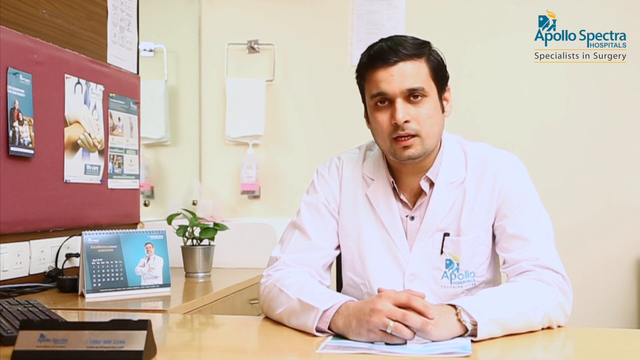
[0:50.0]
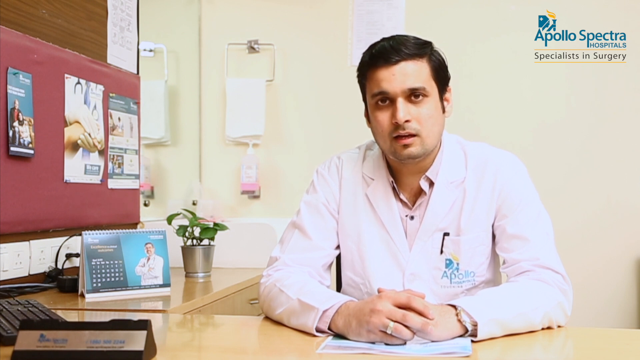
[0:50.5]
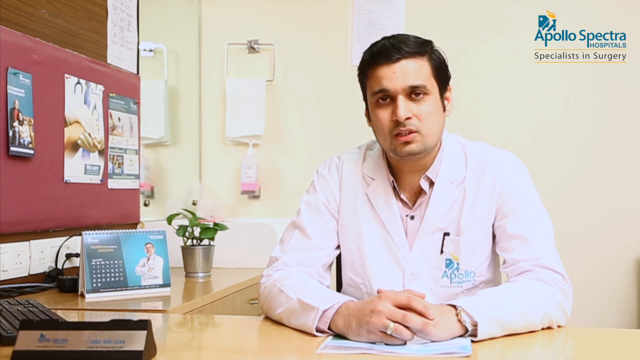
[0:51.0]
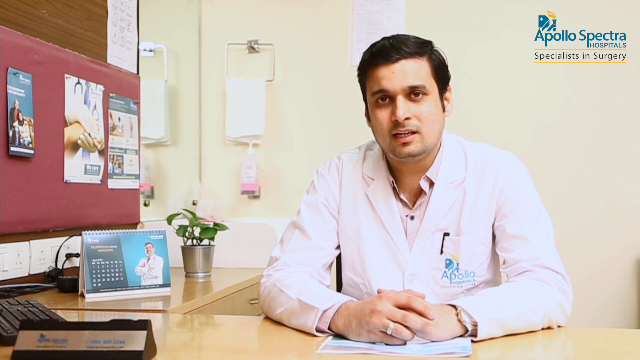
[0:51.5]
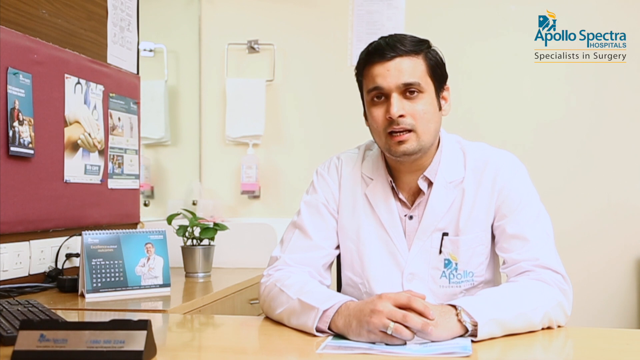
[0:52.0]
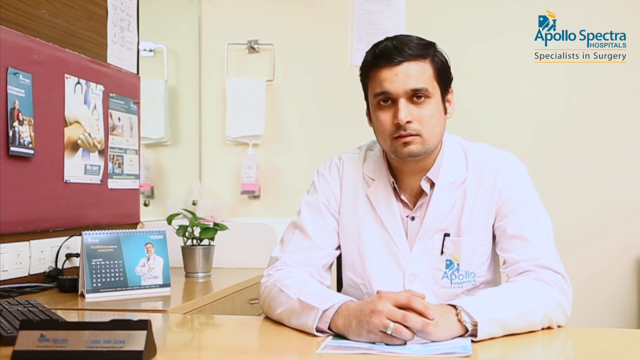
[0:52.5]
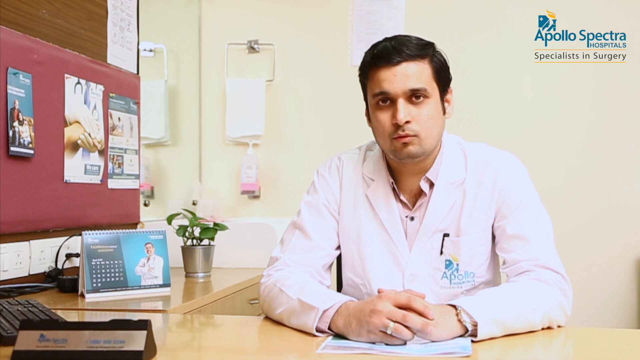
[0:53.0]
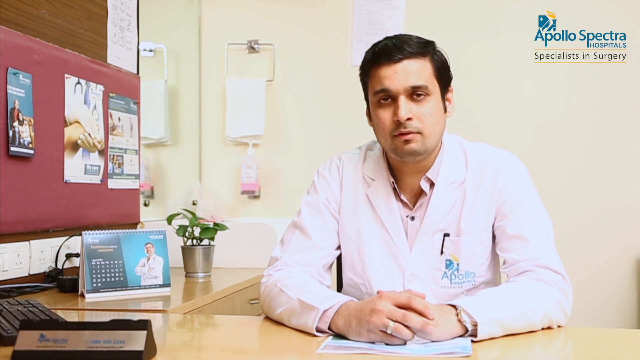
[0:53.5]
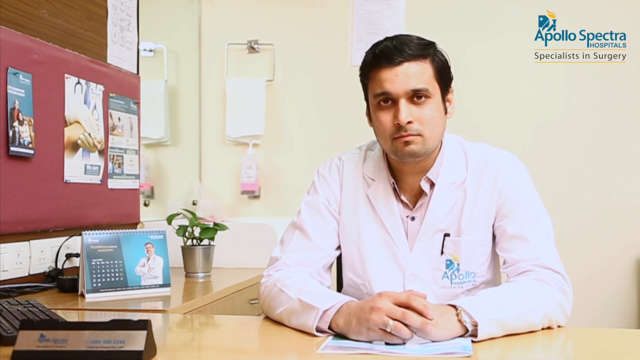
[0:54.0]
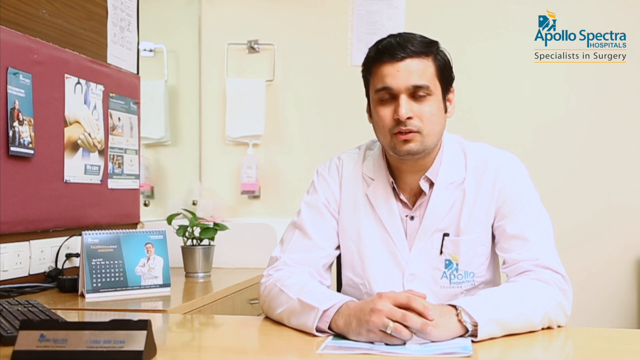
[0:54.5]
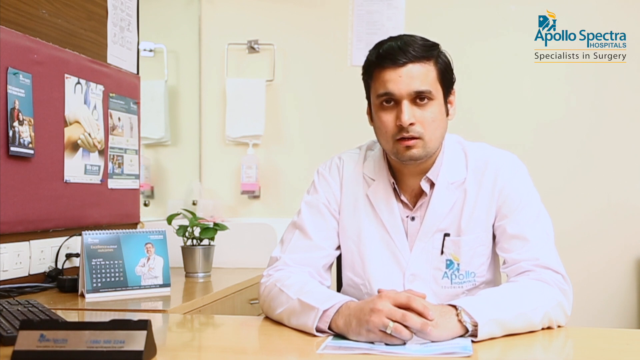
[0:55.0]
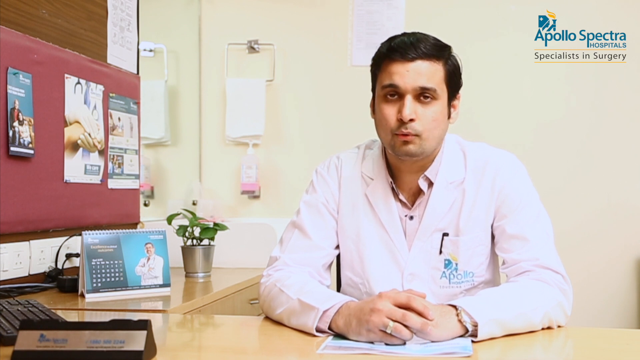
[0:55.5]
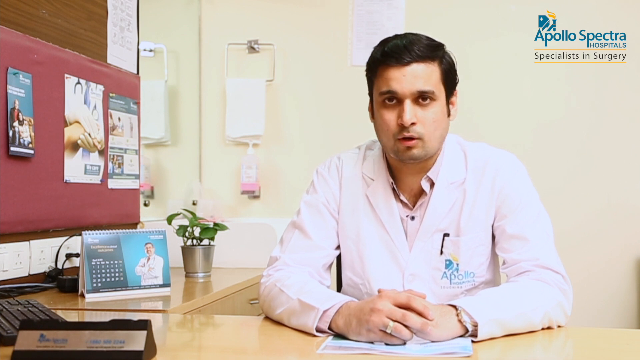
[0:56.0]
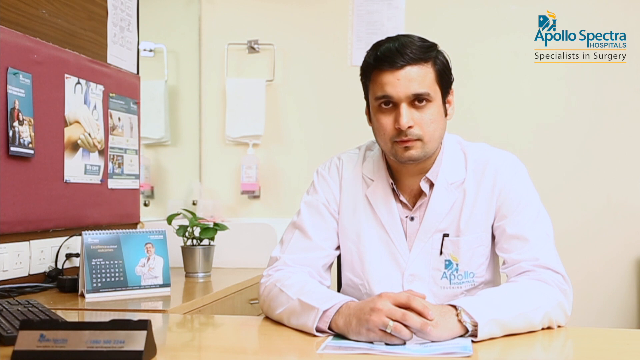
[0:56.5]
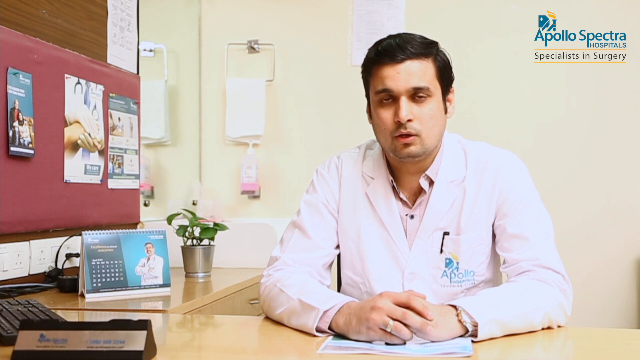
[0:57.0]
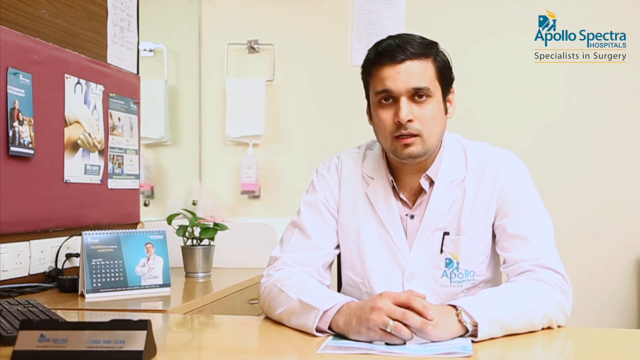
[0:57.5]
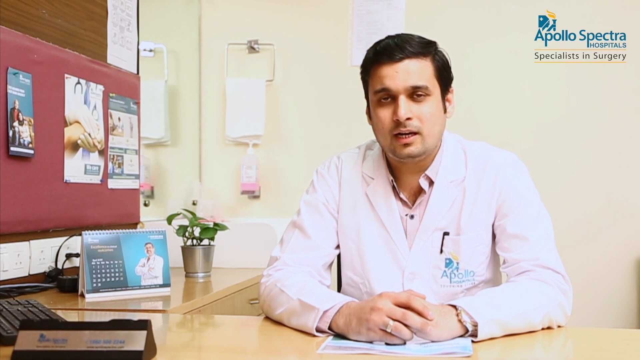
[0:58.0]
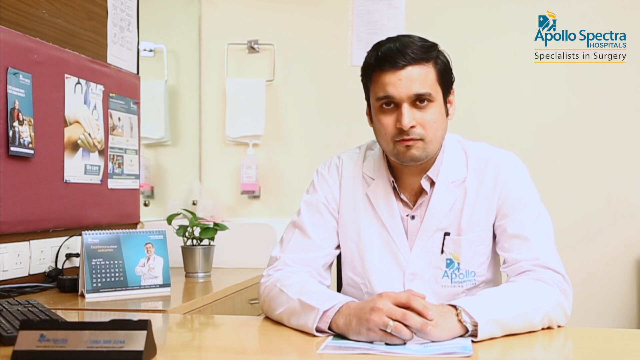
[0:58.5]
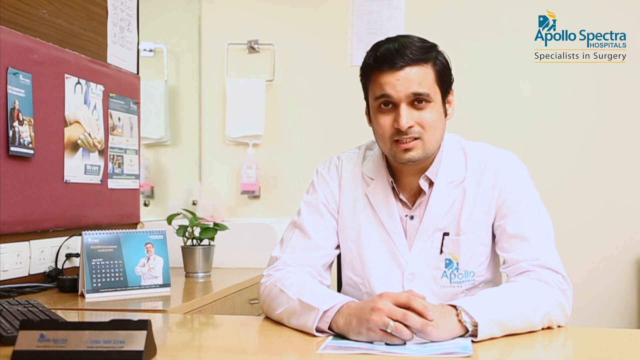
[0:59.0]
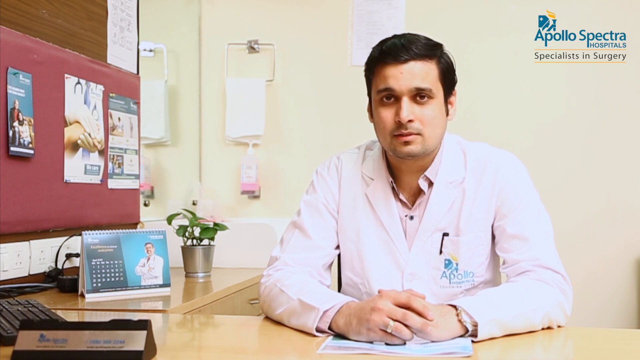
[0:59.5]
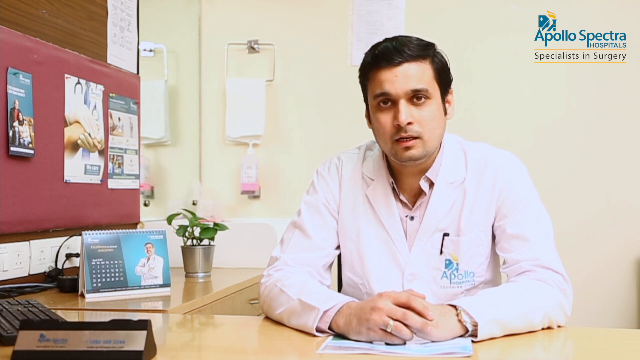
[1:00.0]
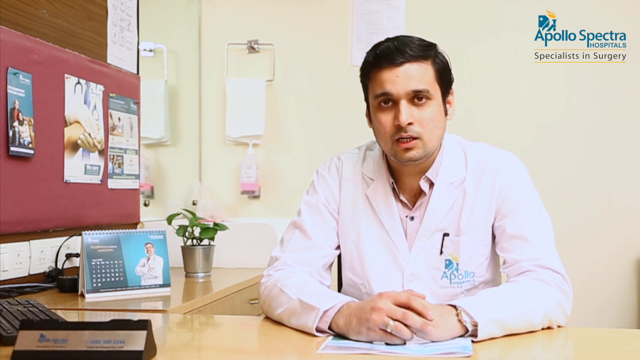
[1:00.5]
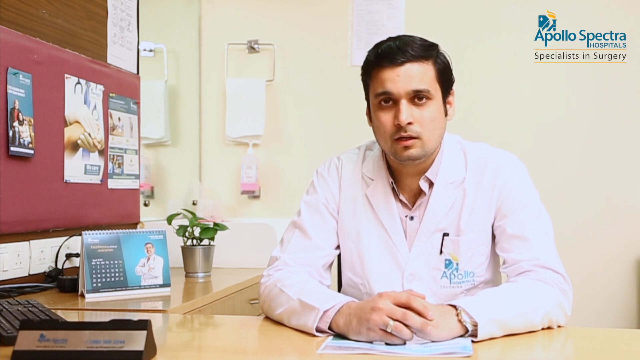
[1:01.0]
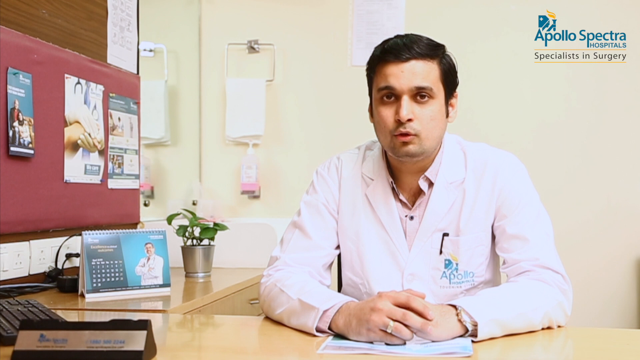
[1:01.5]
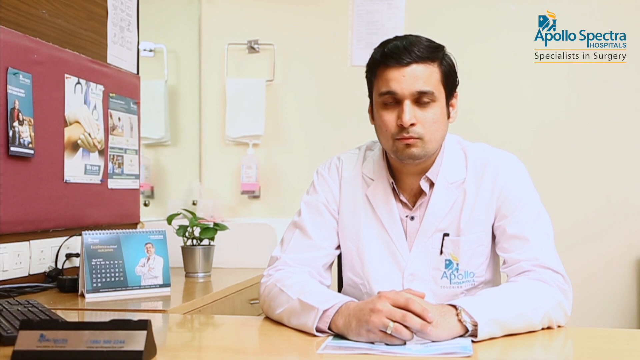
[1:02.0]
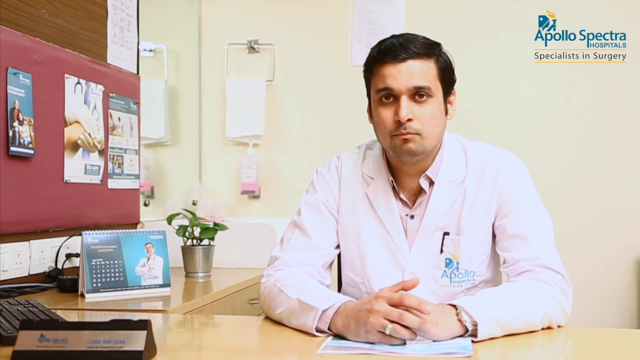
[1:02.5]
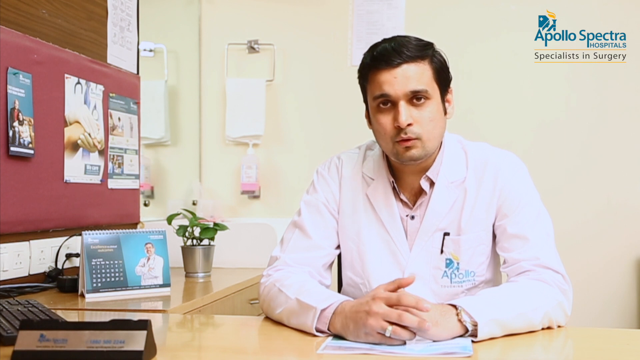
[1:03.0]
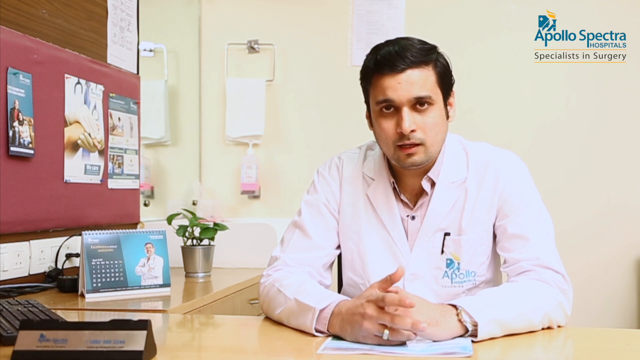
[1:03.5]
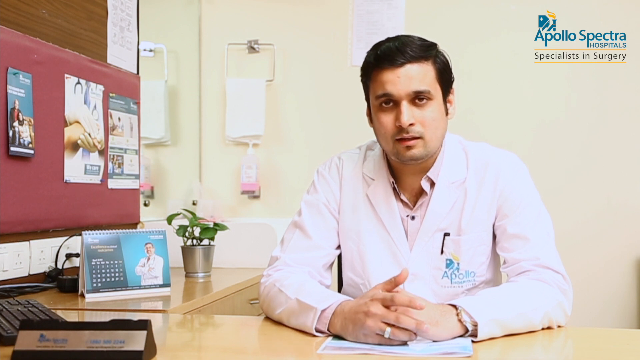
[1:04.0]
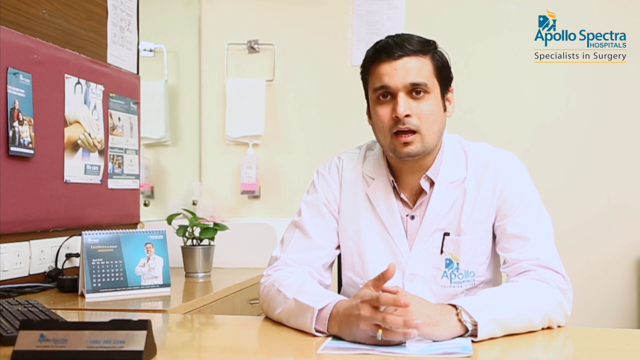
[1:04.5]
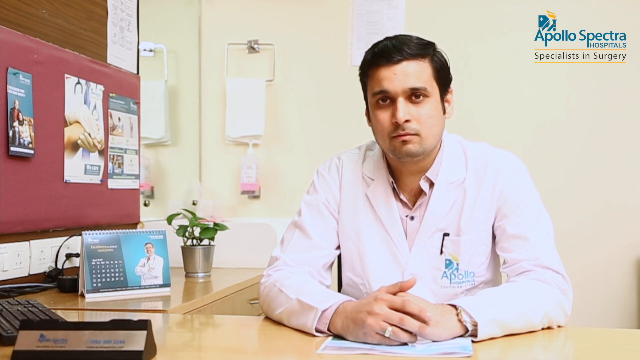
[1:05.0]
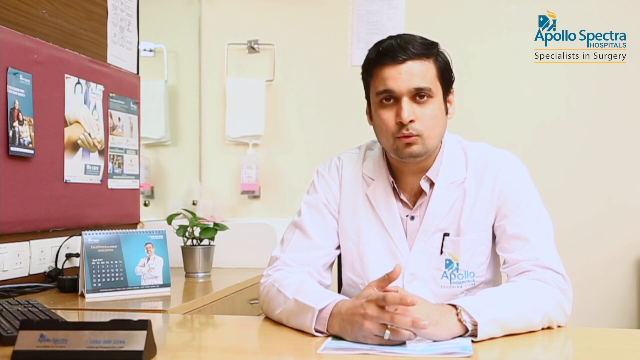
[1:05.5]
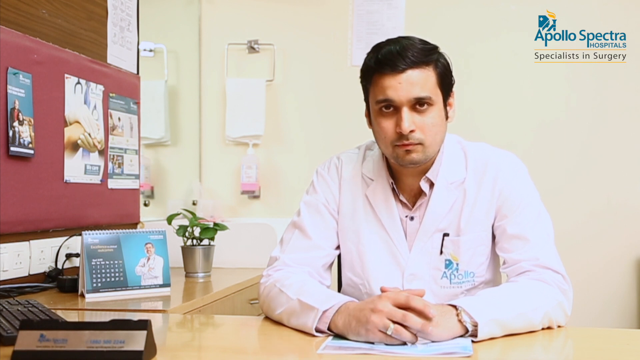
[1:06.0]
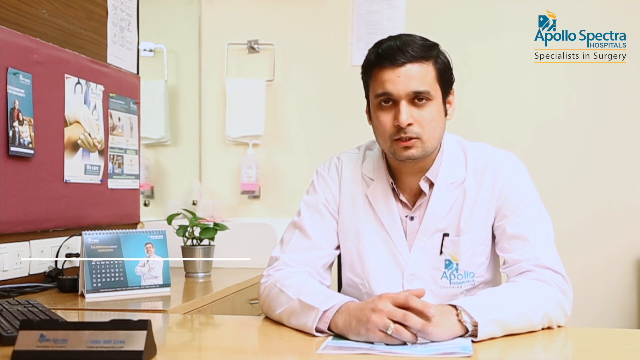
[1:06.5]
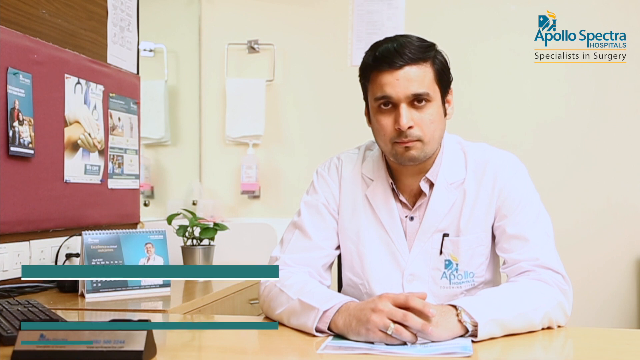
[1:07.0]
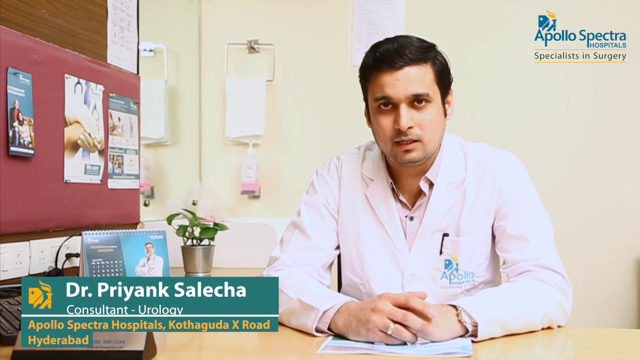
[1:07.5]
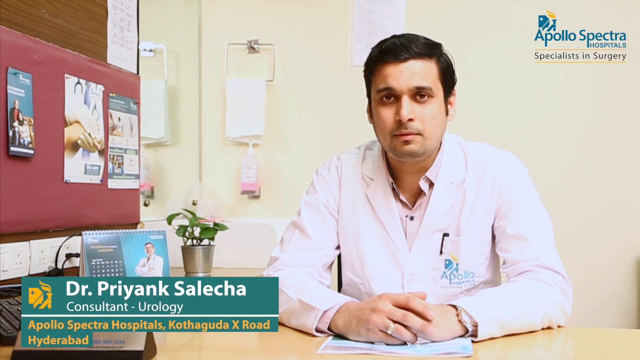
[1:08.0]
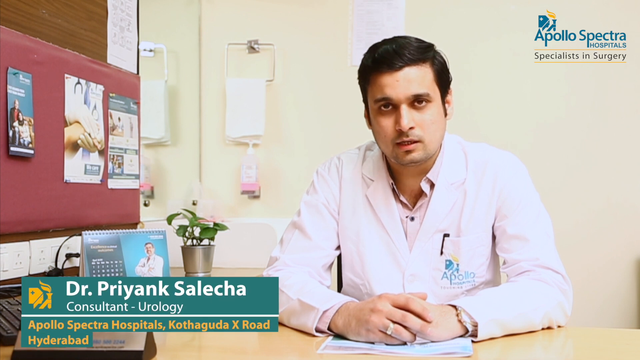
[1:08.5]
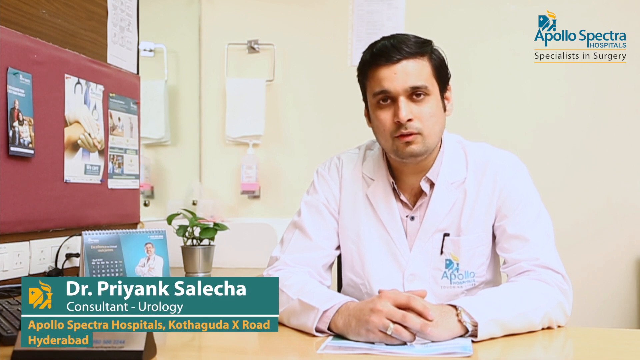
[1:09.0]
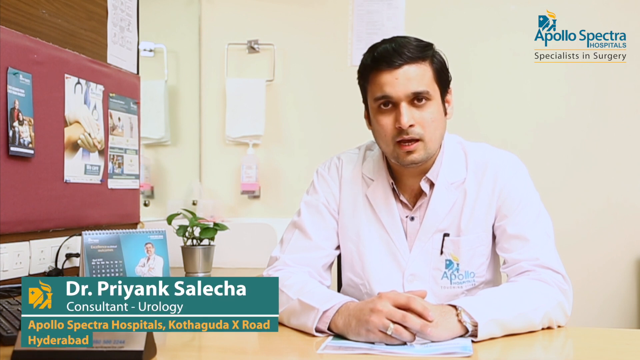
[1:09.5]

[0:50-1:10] The doctor continues to talk. He does not smile and is intently focused on the camera, moving his hands a bit to make gestures as he speaks. He is slightly hunched over, and his button-up shirt is a pinkish color. The graphic seen earlier when he began talking appears again in the bottom left-hand corner, showing his name, "Dr. Priyank Salecha, consultant urology," along with the address and location where he works. A white piece of paper hangs on the cream-colored wall behind him, and some cords are plugged into the electrical outlets on the left-hand side. The mirror shows the reflection of the hand towel holder and the soap dispenser. No other activity occurs; the doctor just continues to speak.